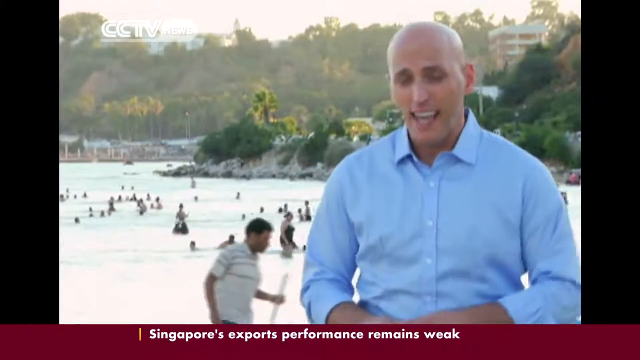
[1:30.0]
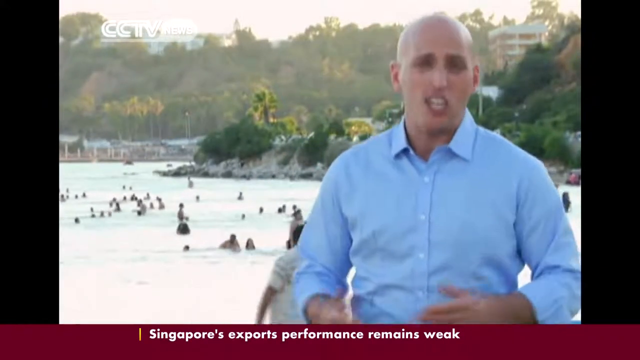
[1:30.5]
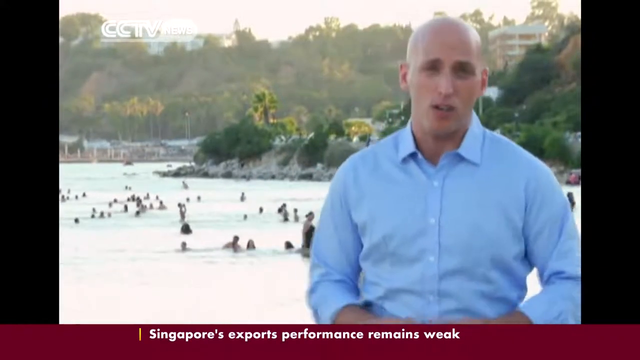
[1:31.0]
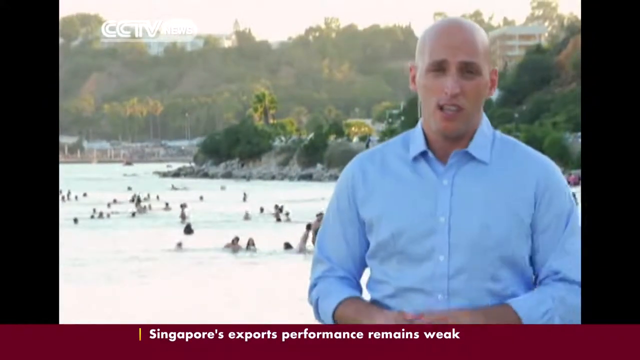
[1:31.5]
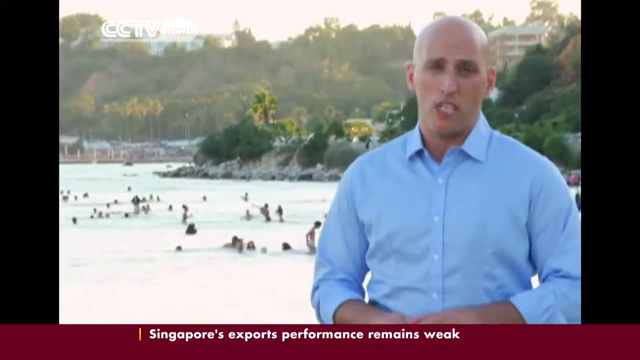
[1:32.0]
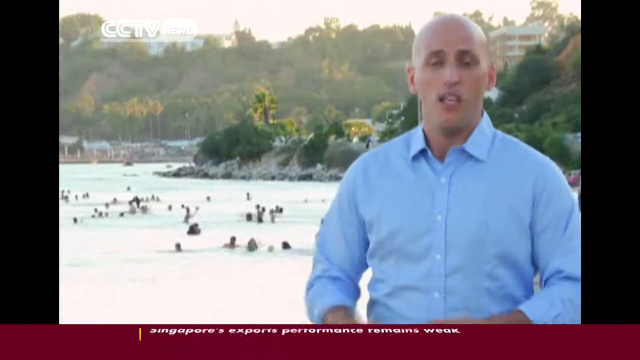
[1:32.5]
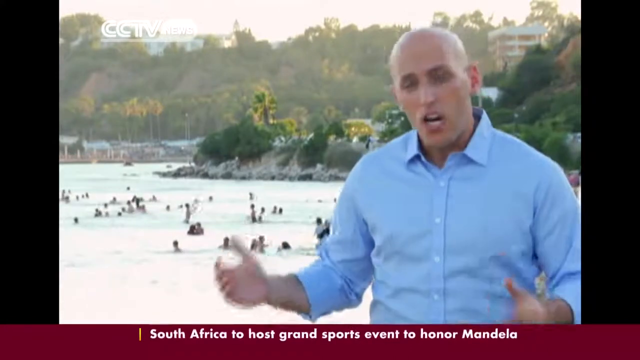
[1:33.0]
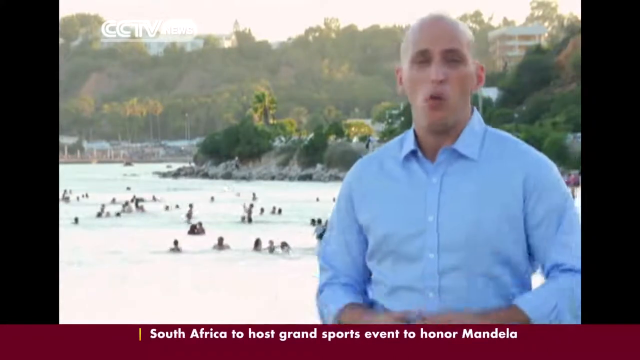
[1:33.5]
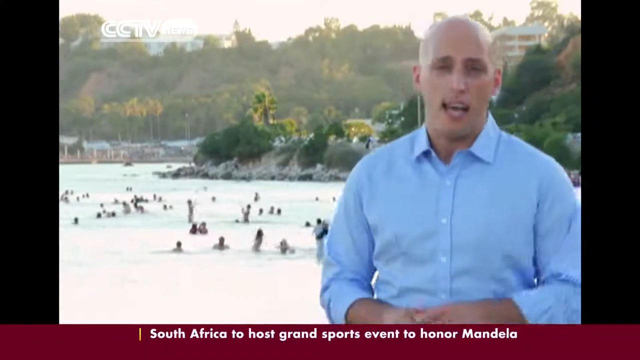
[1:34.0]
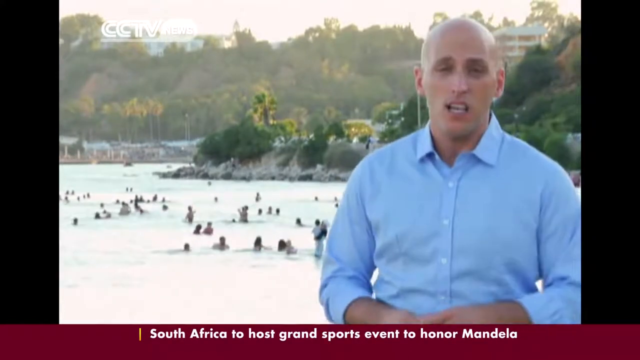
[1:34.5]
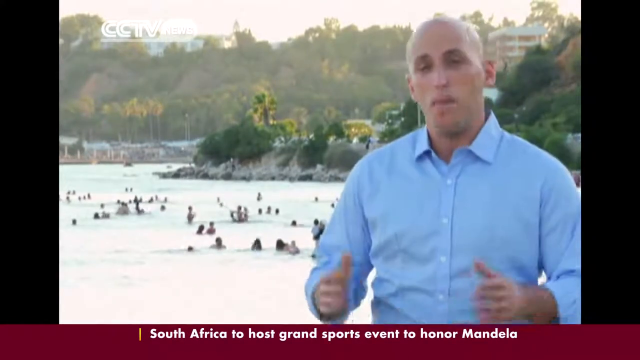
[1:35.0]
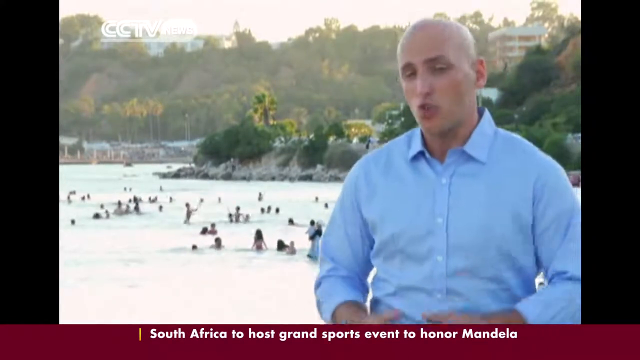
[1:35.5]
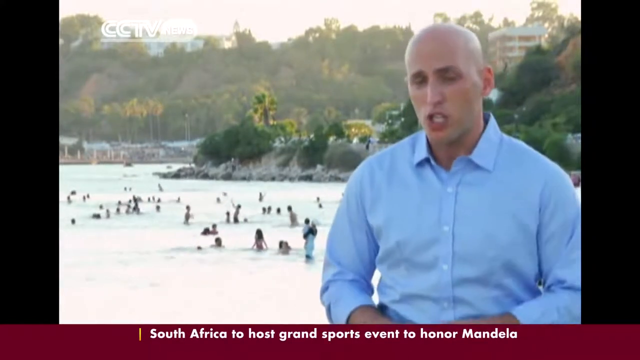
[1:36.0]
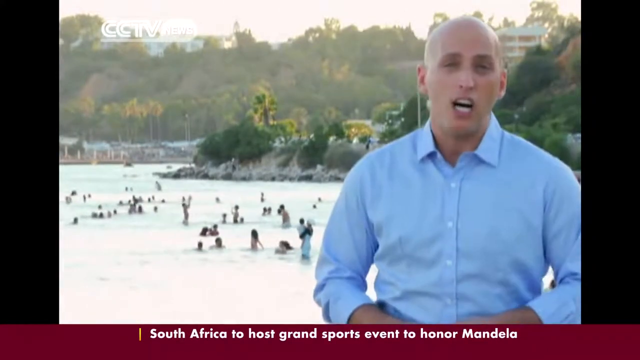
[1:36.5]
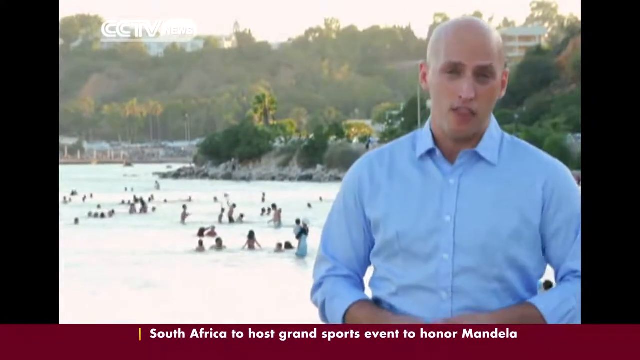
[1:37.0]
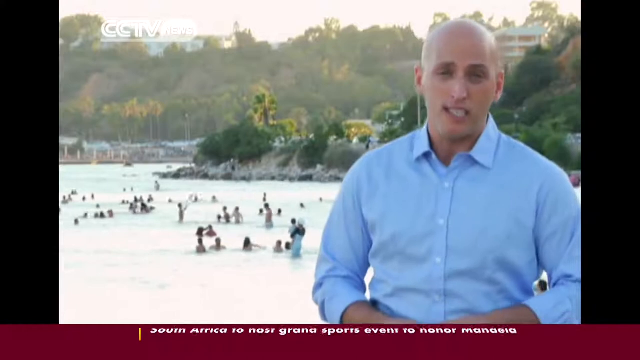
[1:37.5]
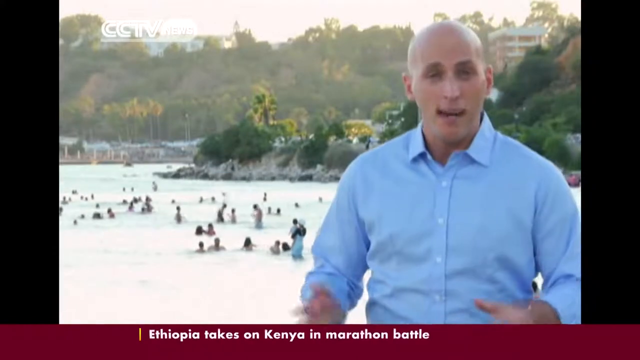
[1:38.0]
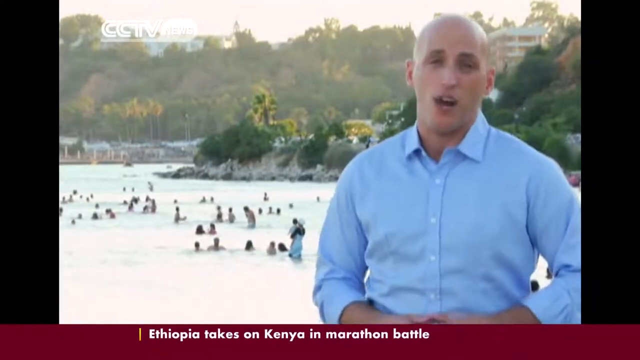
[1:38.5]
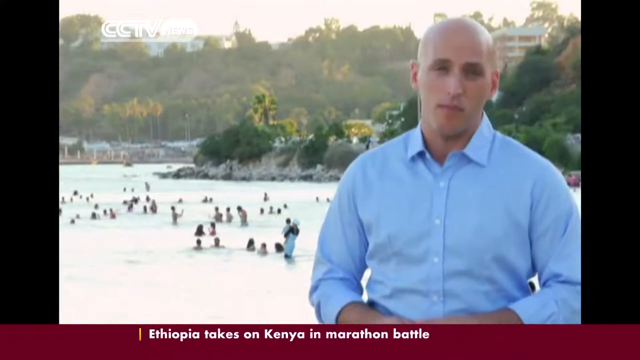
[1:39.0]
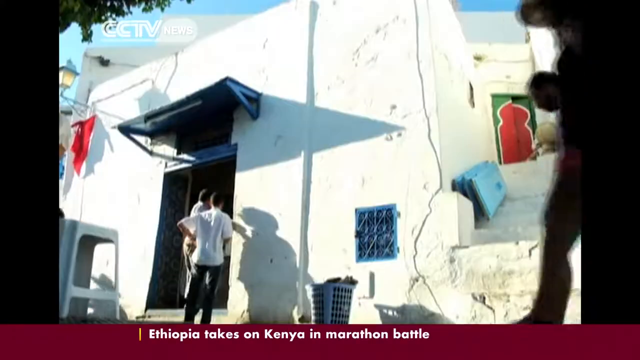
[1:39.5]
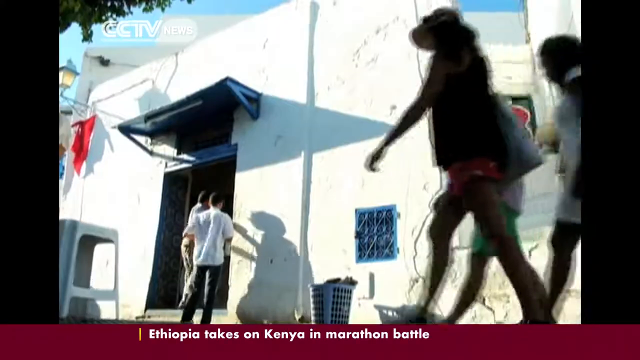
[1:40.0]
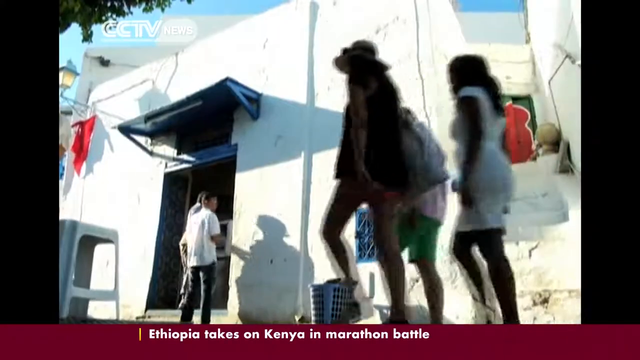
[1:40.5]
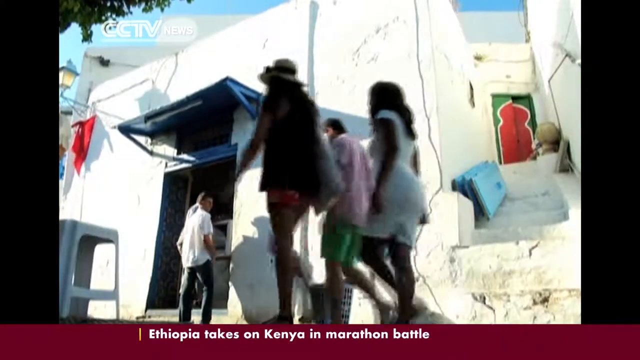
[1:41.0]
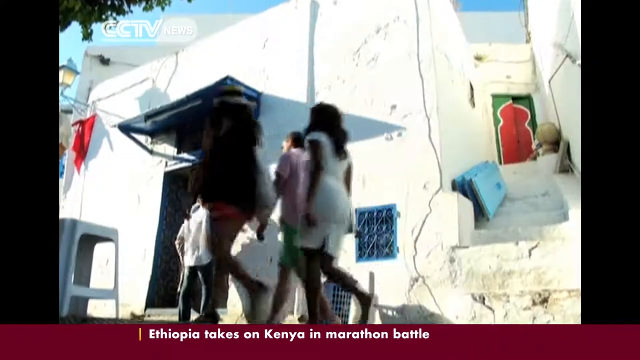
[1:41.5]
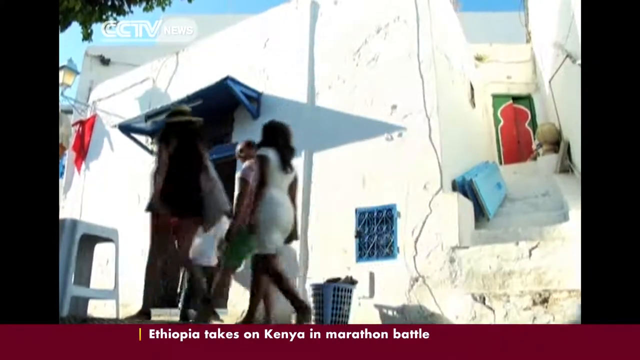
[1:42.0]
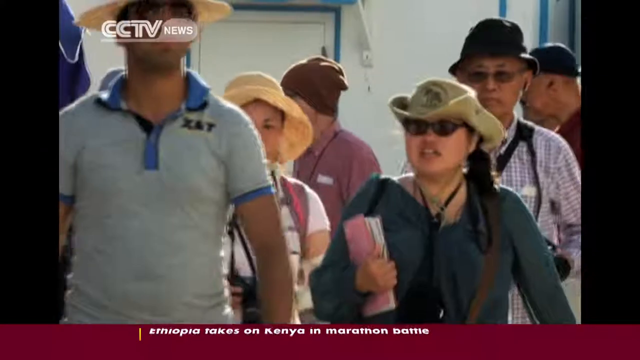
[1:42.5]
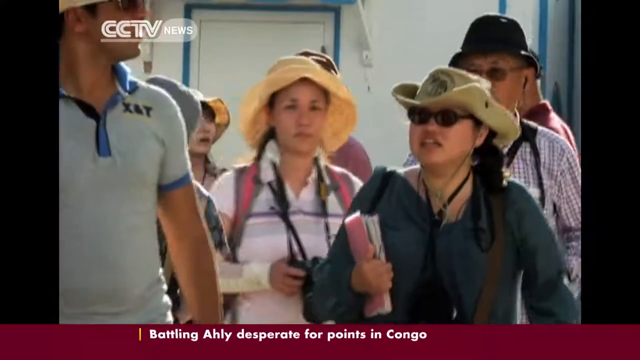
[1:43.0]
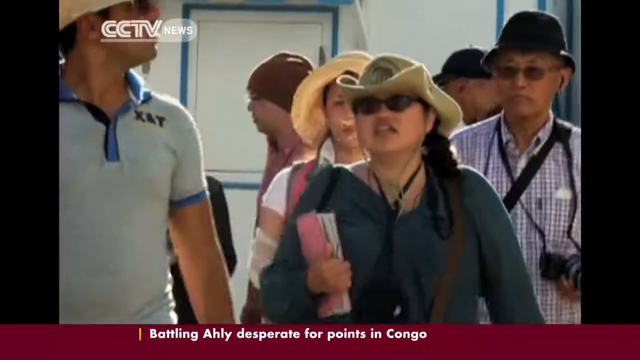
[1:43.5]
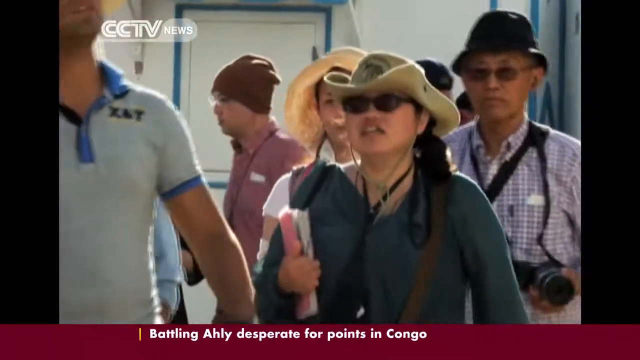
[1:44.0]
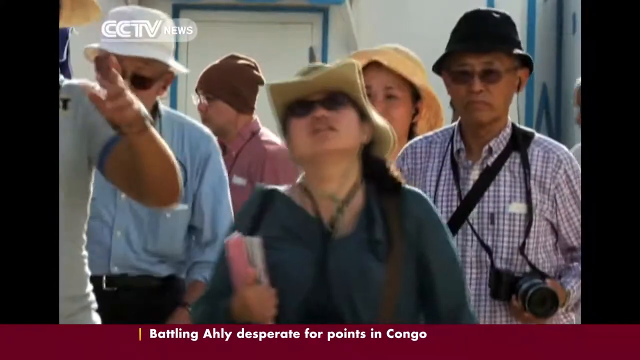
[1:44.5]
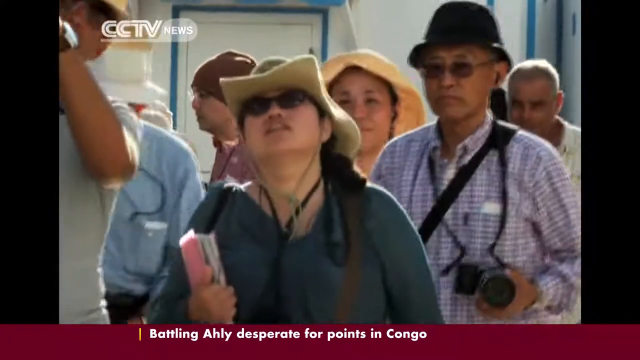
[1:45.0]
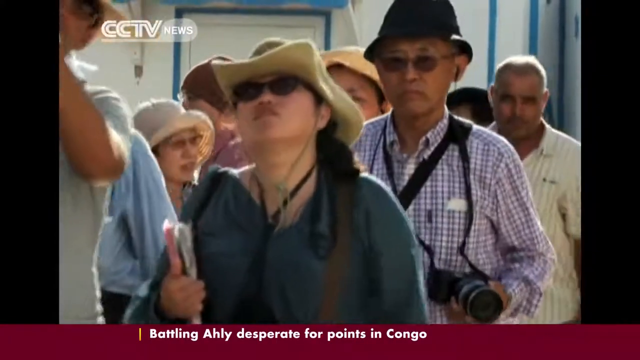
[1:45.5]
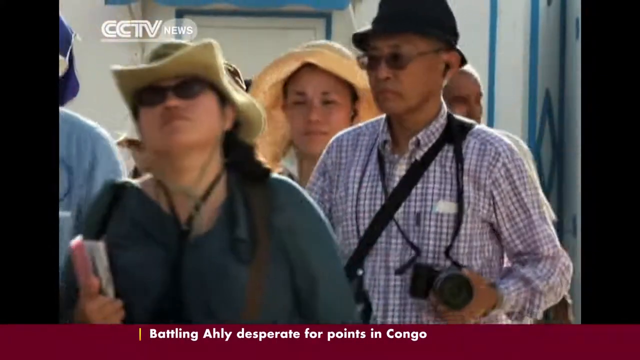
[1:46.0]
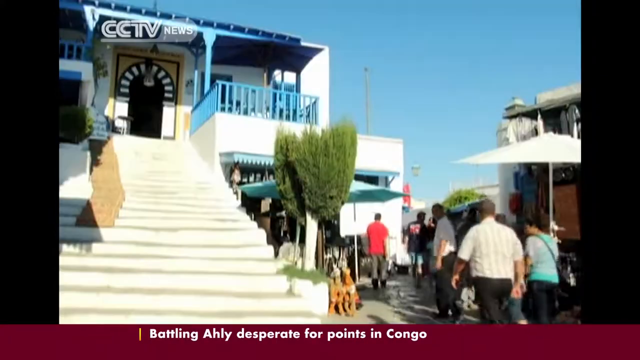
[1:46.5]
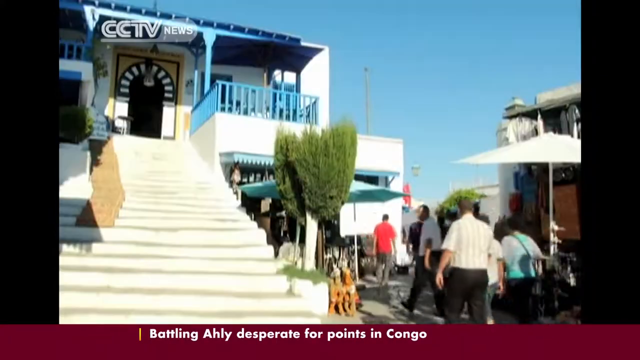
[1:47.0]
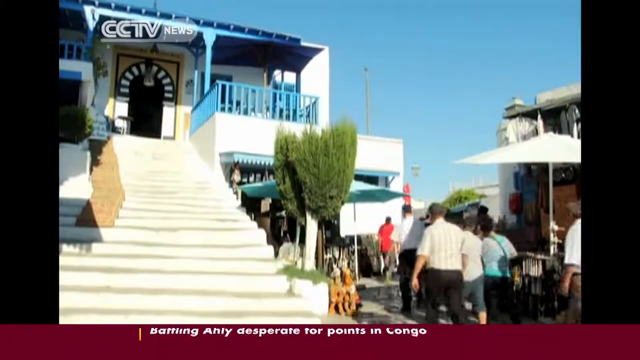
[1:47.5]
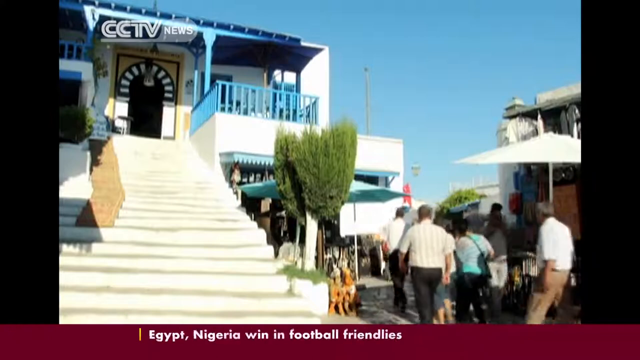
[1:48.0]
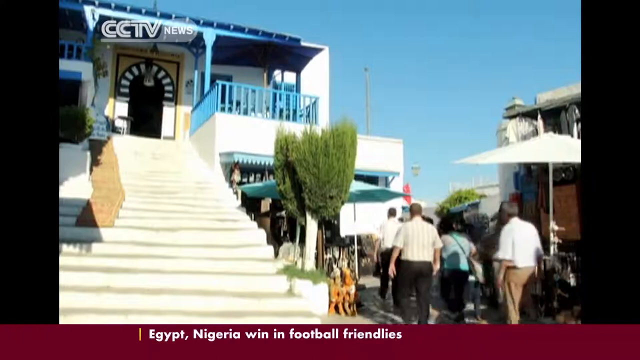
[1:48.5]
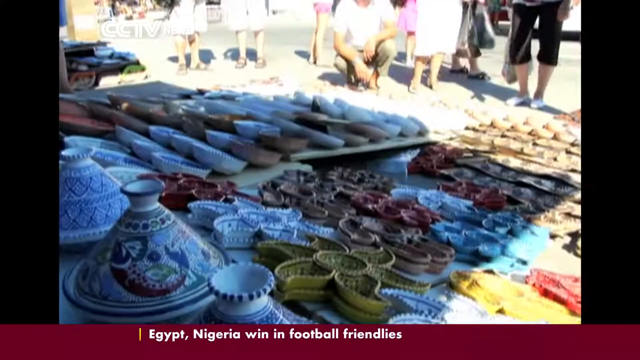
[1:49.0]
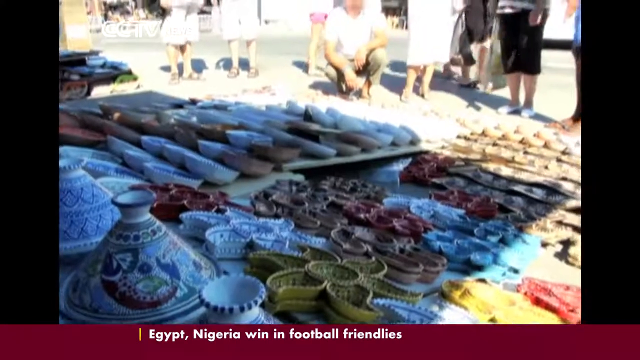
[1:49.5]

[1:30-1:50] The reporter, Rory Brettenberg, continues speaking to camera, gesticulating a lot with his hands. People swim in the ocean behind him and others are on the beach behind him. He walks, then stops and talks directly to the camera. When he finishes, the video cuts to more static shots of the local marketplace: a group of Asian tourists walks around, looking up and pointing at things, and the local architecture is shown. Another cut shows a market stall with many pieces of porcelain, china and pottery laid out on the floor, colorful and painted with interesting patterns, as tourists look at them on a hot, sunny day. The camera pans up from the pottery to the tourists standing on the street looking at it.